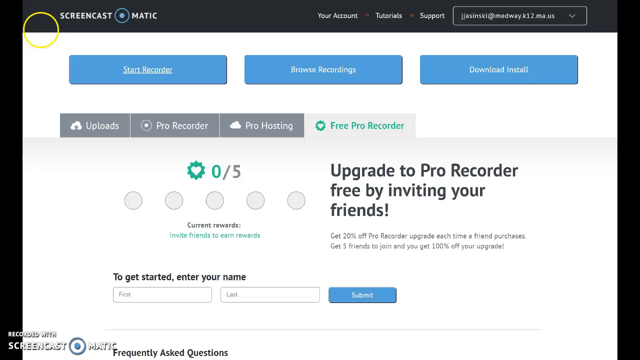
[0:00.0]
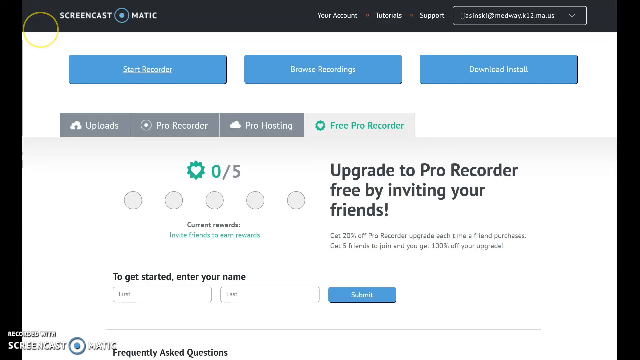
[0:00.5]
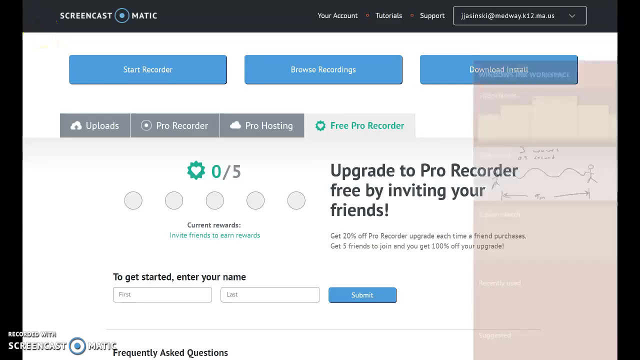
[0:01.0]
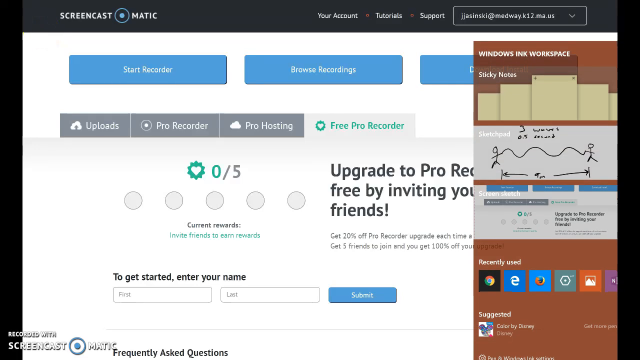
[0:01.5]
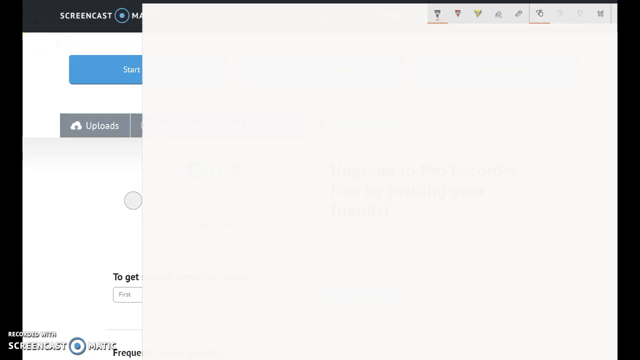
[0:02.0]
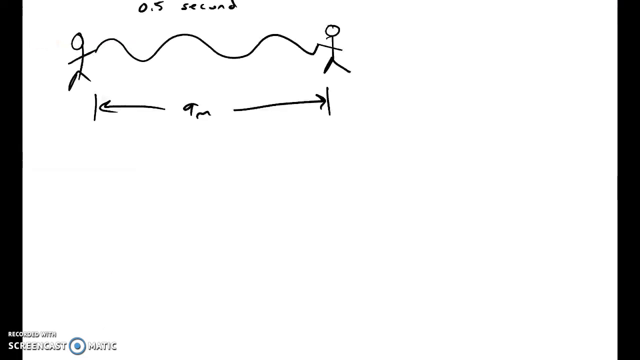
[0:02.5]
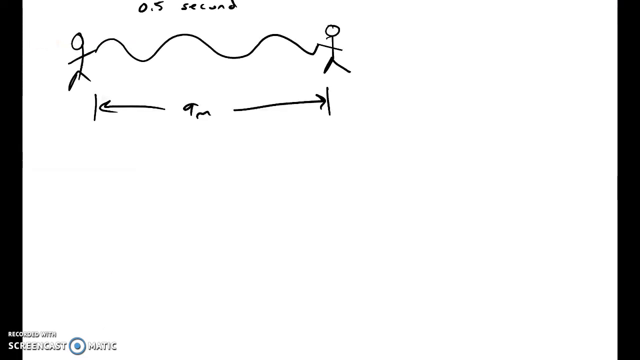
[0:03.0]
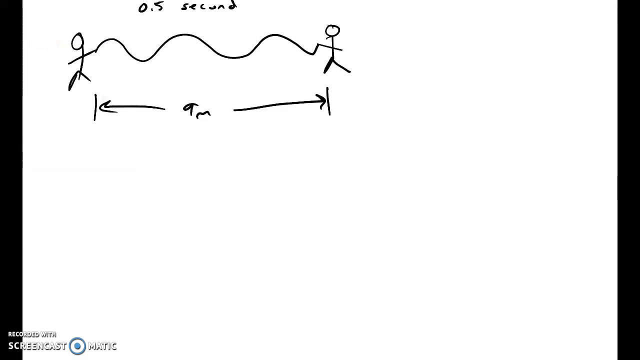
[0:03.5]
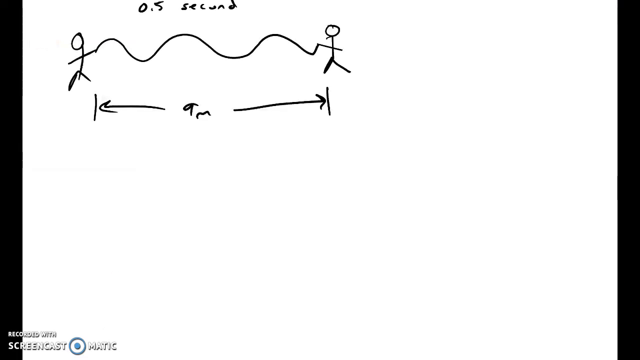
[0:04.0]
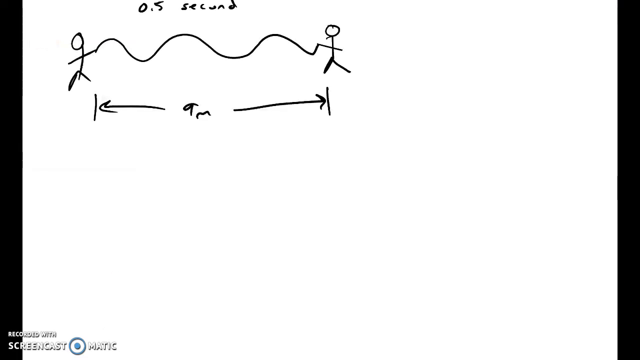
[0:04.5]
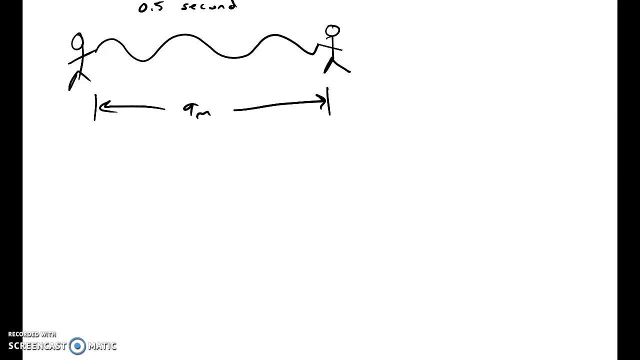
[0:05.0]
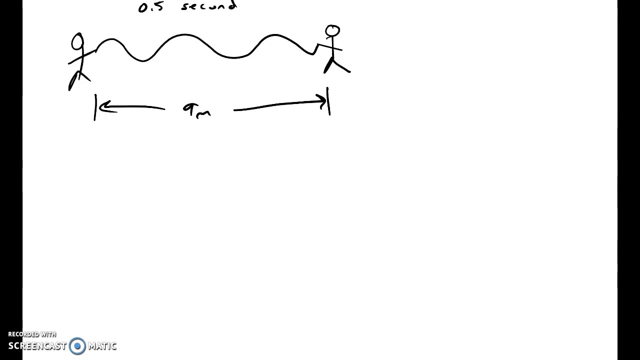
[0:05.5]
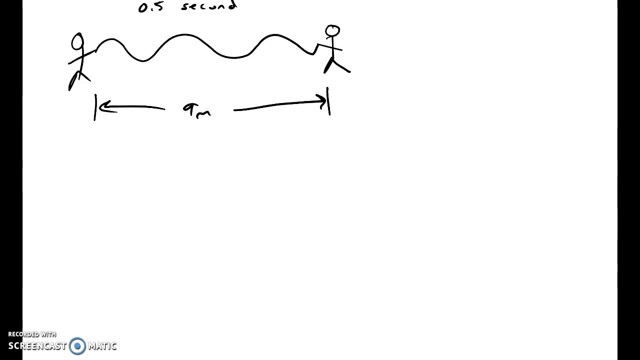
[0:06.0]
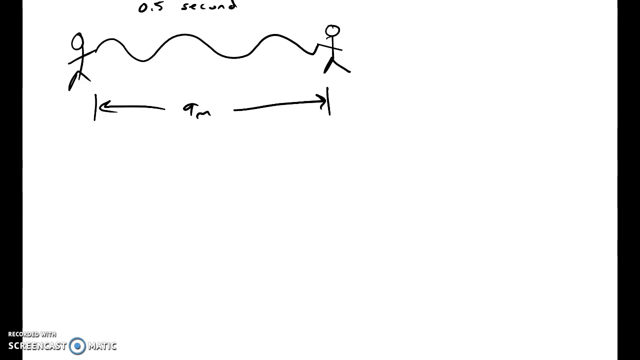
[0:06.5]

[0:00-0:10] A yellow circle is in the top left-hand corner, along with a screen about upgrading to Pro Recorder Free by inviting your friends. In the bottom right-hand corner, an orange transition window quickly opens. It says "Windows Ink Workspace Sticky Notes" and has a picture below that, plus several icons toward the bottom right-hand side, also in orange. A very fast transition follows to a white background with black writing on it: "0.5 seconds", then two stick figures with a squirrely line between them connecting them. Below them are two straight lines with arrows pointing at both of them, with "9M" between the two lines.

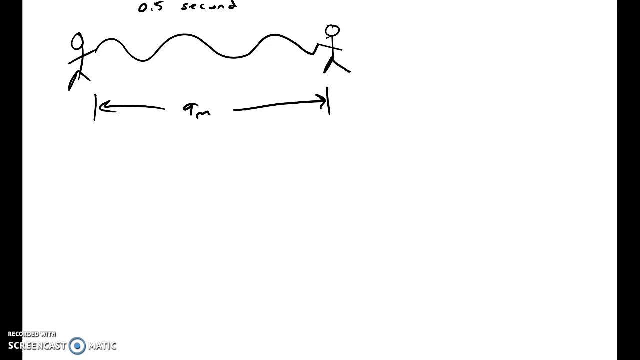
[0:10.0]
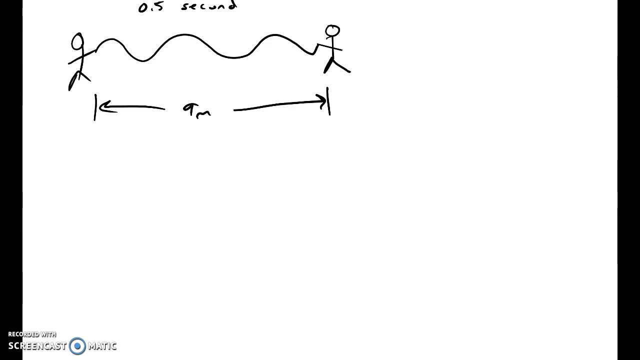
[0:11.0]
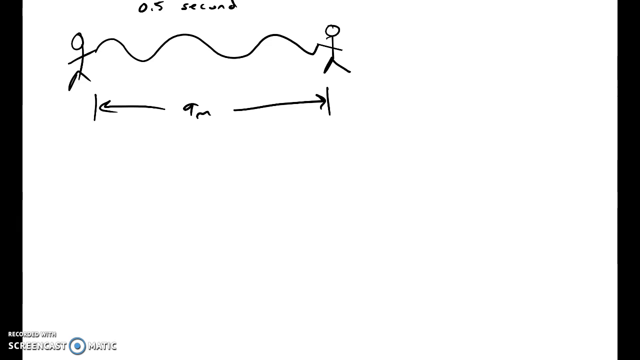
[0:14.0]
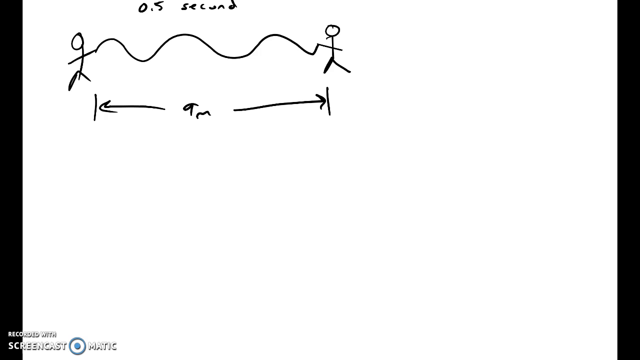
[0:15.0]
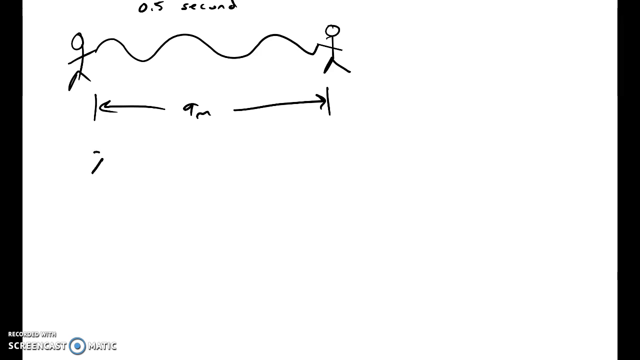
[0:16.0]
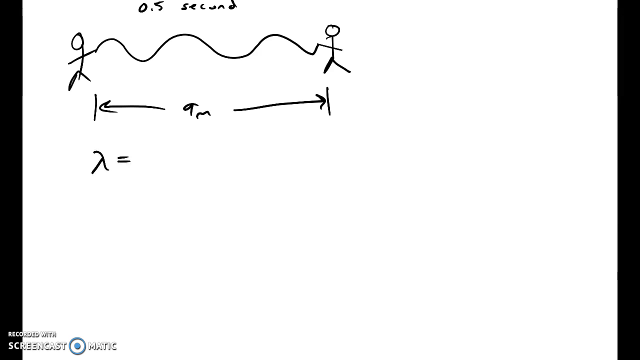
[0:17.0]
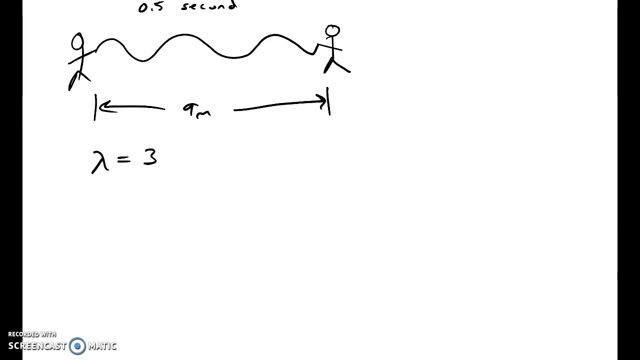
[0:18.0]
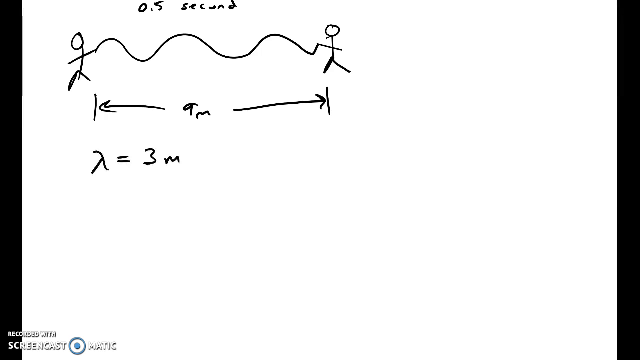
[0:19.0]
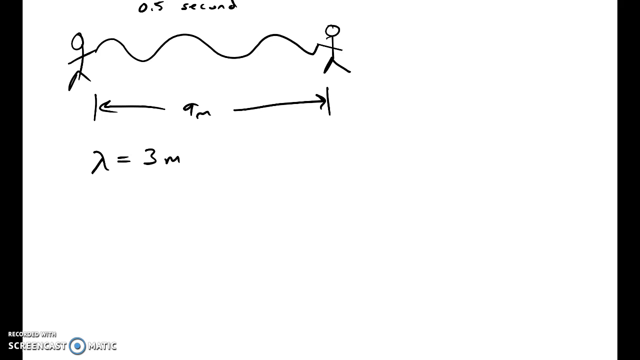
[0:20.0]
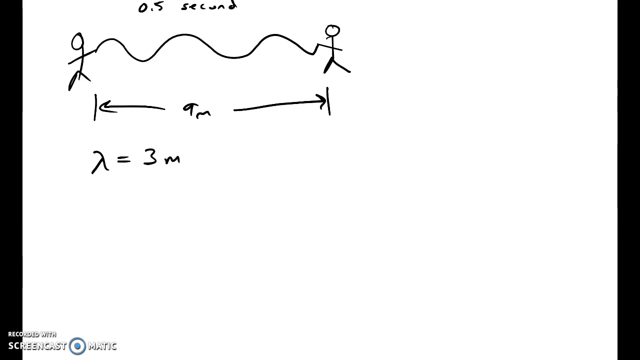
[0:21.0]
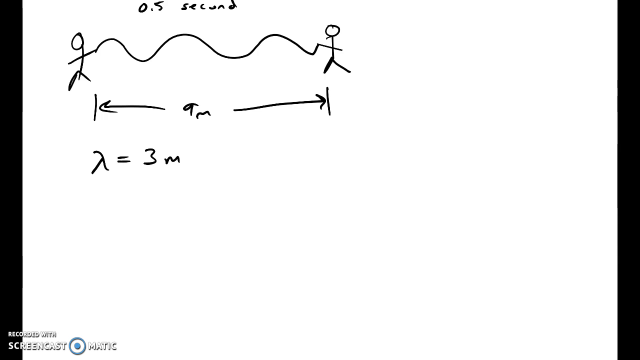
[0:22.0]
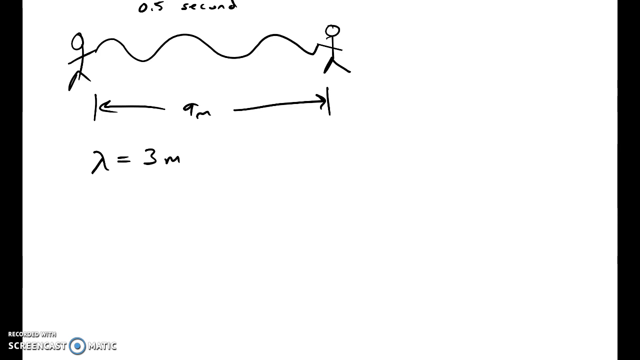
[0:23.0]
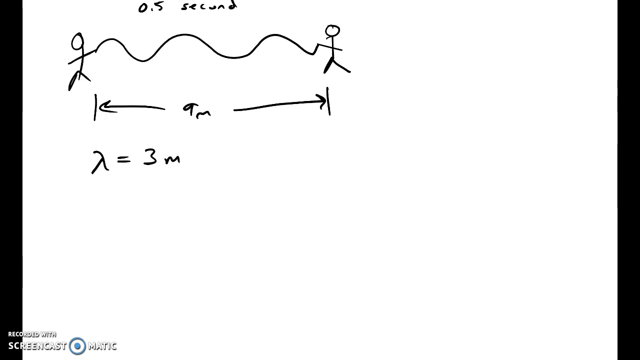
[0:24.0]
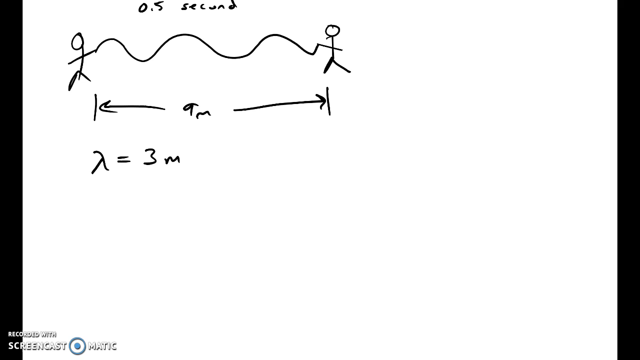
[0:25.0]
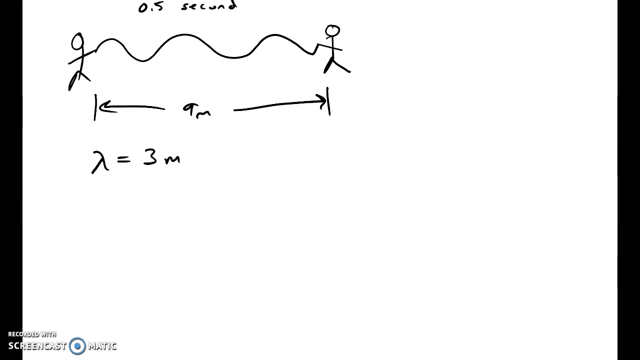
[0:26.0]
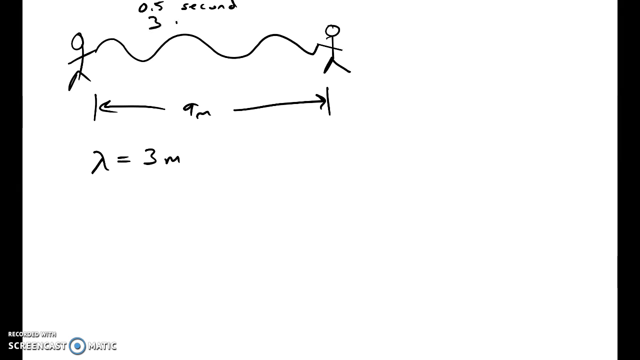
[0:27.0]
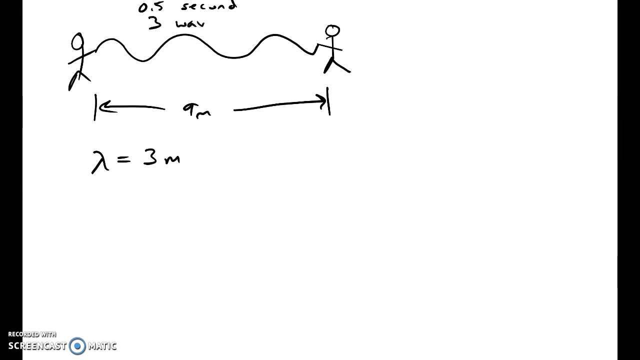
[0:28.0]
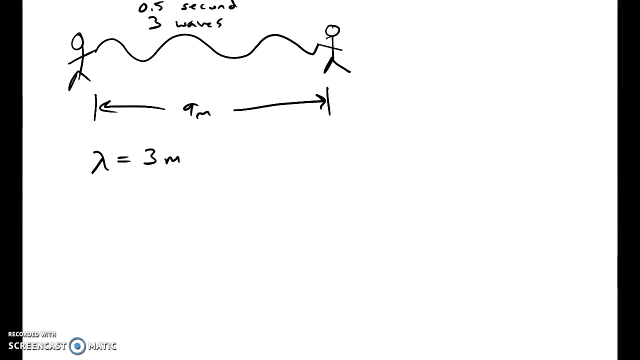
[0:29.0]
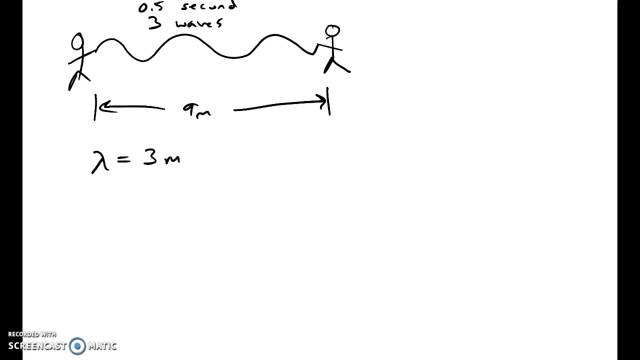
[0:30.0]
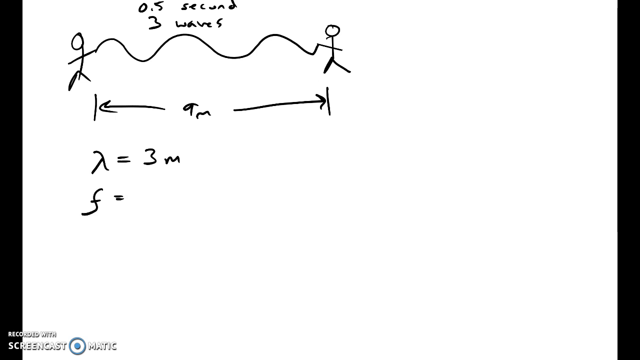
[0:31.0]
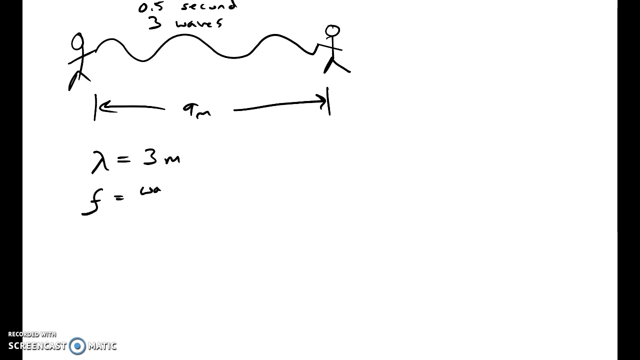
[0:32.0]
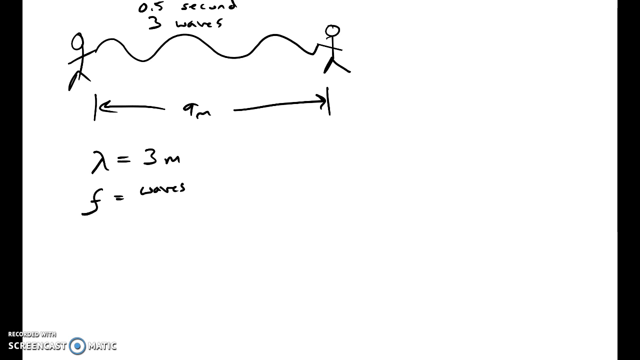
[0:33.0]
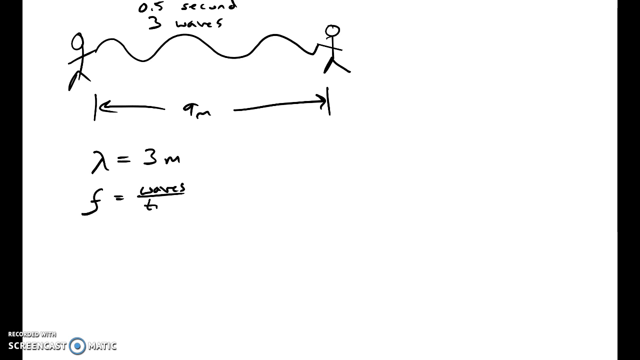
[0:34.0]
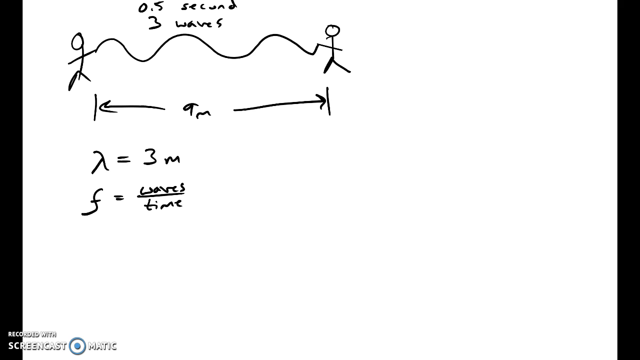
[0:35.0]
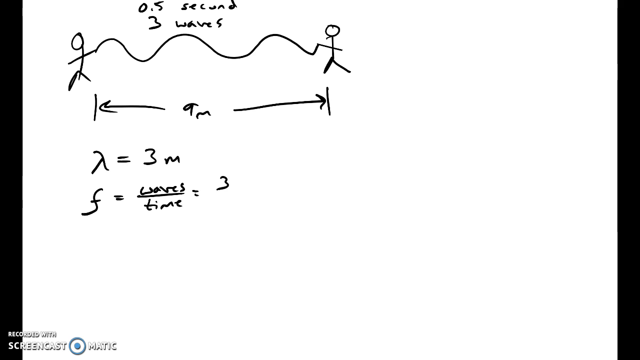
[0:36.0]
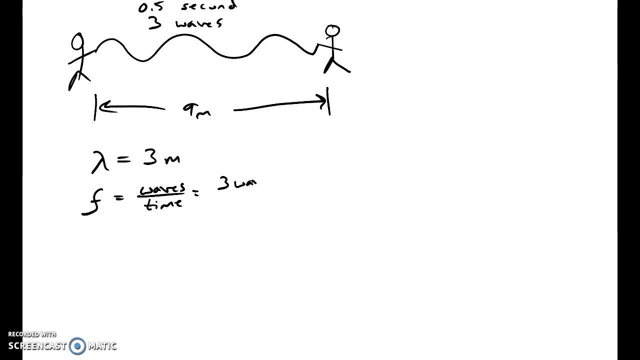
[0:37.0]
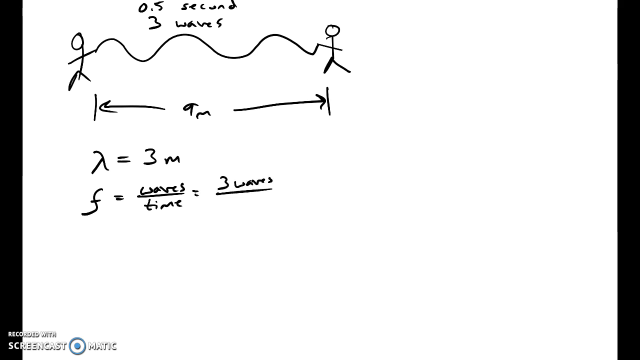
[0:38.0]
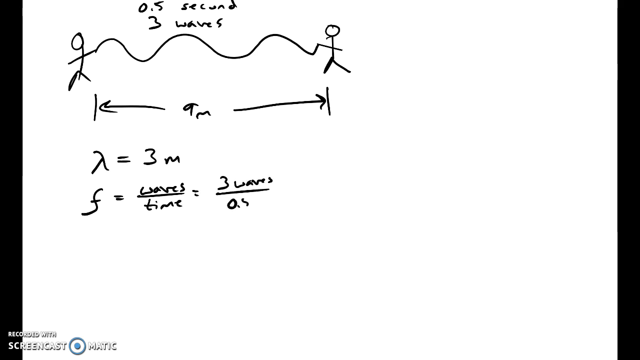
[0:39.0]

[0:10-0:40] The same blank white page with writing on it is shown: "0.5 second" at the top, two stick figures with a squirrely line between them connecting their hands, and two vertical lines with arrows pointing in each direction and "9M" between them. Everything is somewhat sloppily handwritten on some sort of paper or blackboard. Someone starts writing a formula below the arrows: some number or picture equals 3.3M. The writing looks smooth and natural, as if someone is actually writing it. Next, someone writes "three waves" at the top, below "0.5 seconds". Below the formula added earlier, "F equals waves" appears, with "waves" underlined and "time" underneath, followed by "equals three waves", also underlined, with "0.5S" underneath. Everything is in black ink.